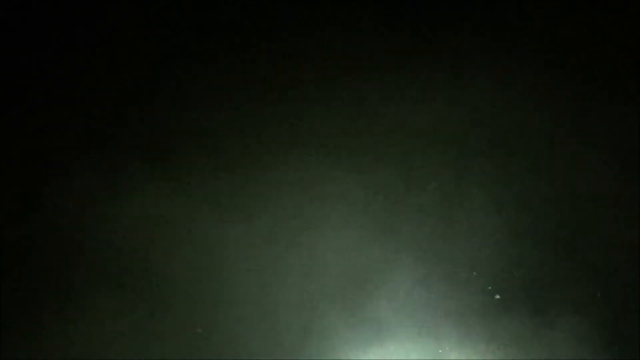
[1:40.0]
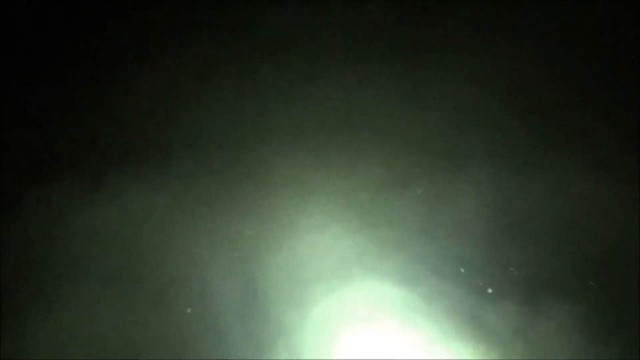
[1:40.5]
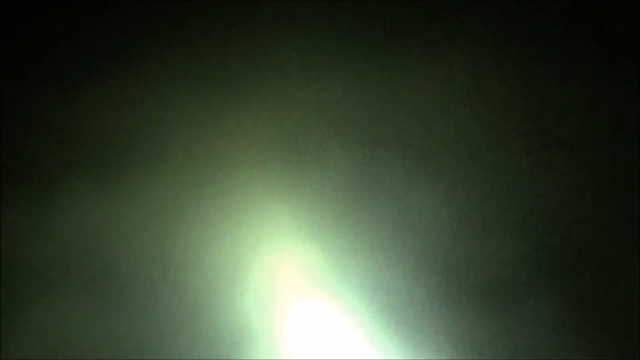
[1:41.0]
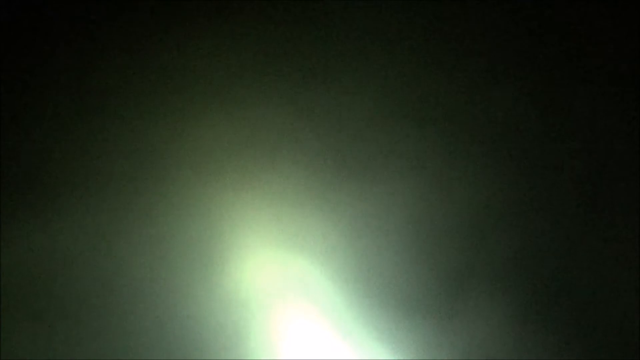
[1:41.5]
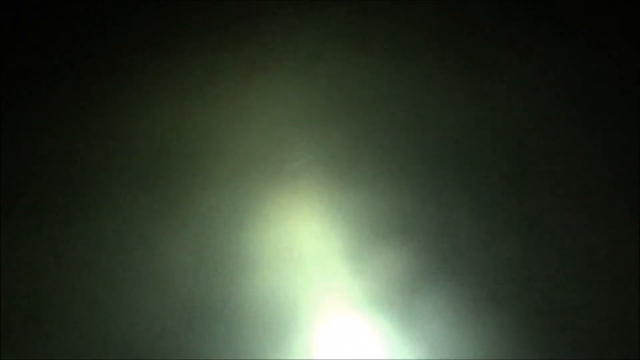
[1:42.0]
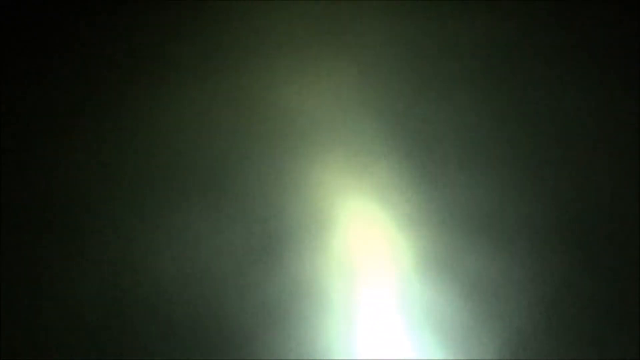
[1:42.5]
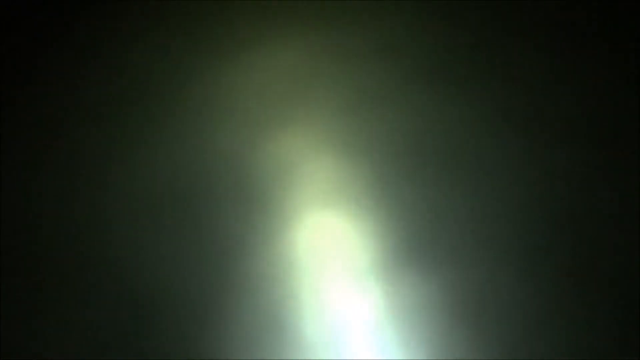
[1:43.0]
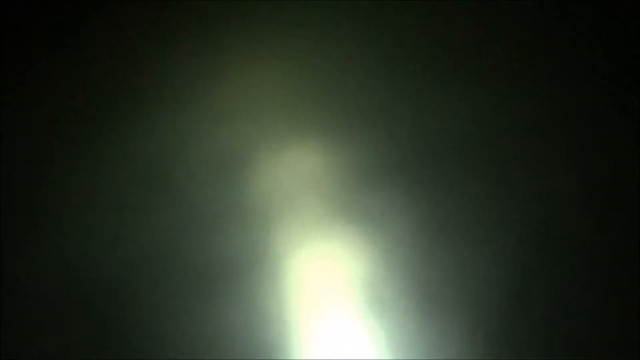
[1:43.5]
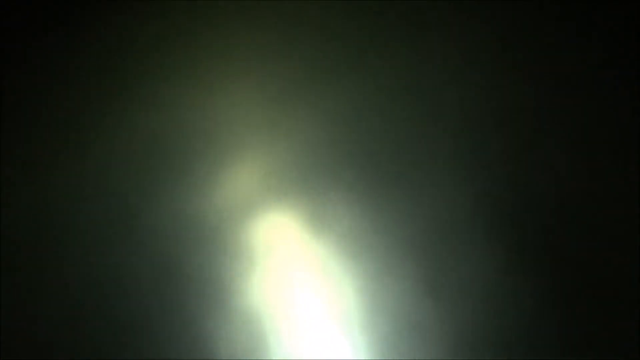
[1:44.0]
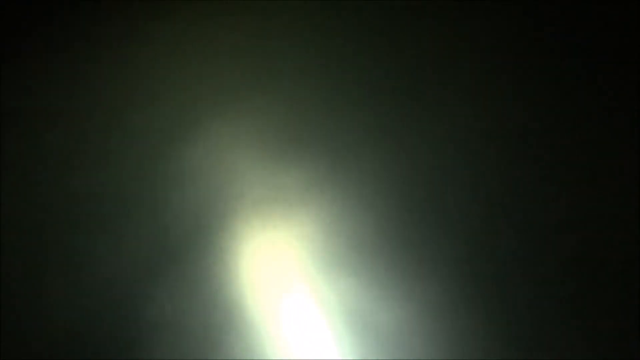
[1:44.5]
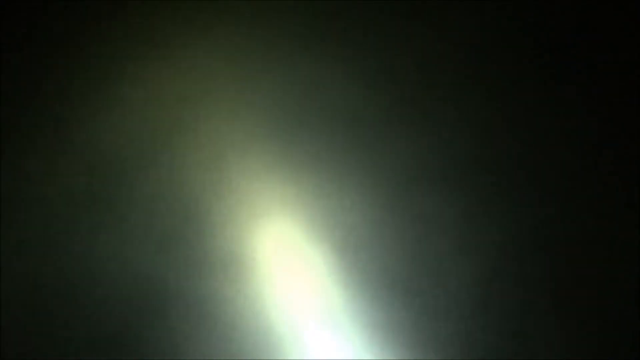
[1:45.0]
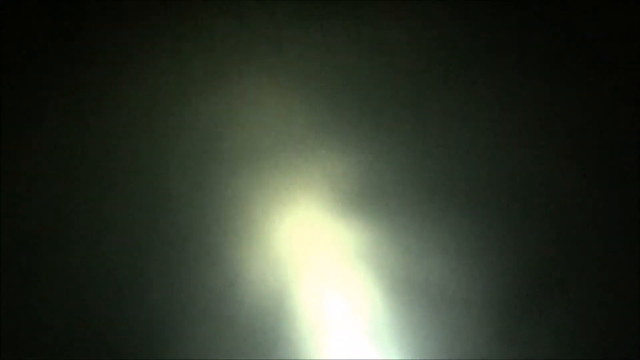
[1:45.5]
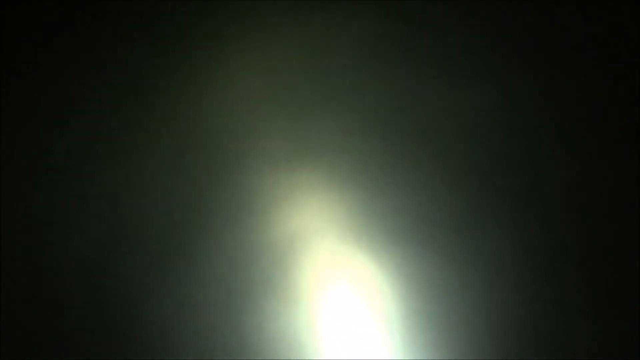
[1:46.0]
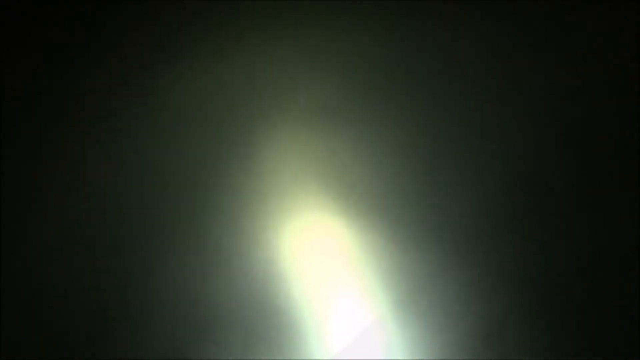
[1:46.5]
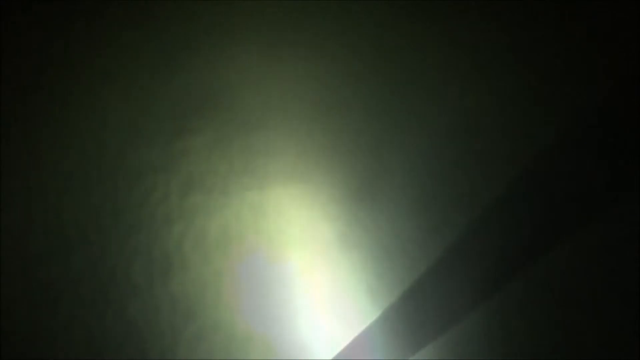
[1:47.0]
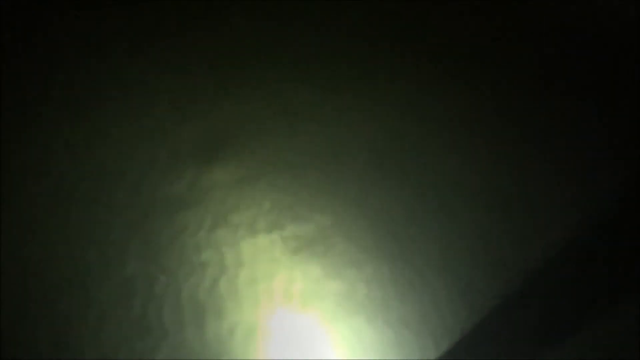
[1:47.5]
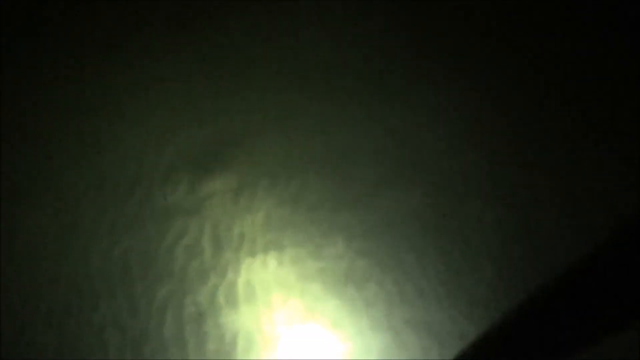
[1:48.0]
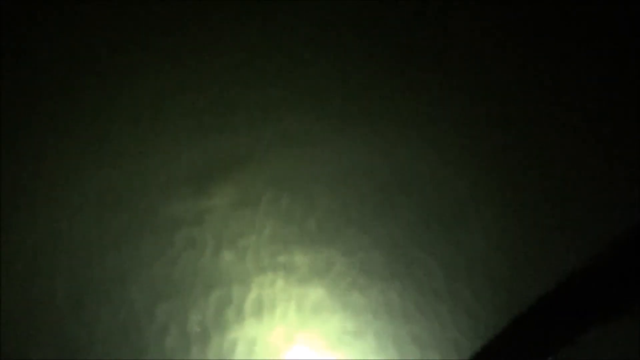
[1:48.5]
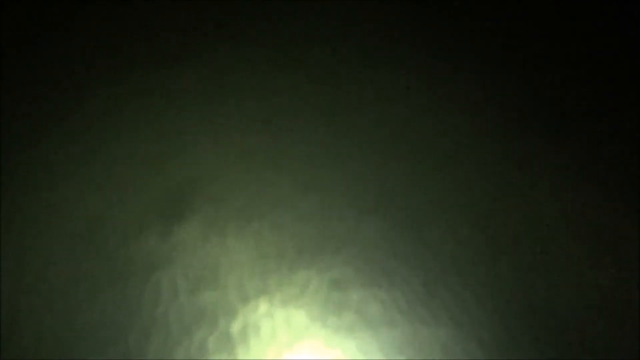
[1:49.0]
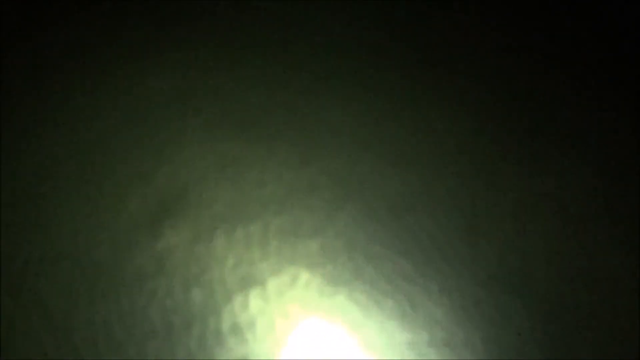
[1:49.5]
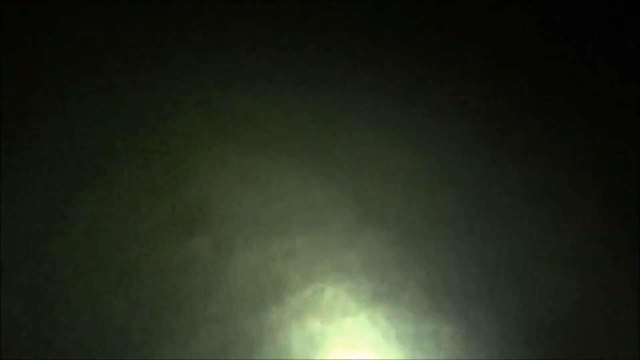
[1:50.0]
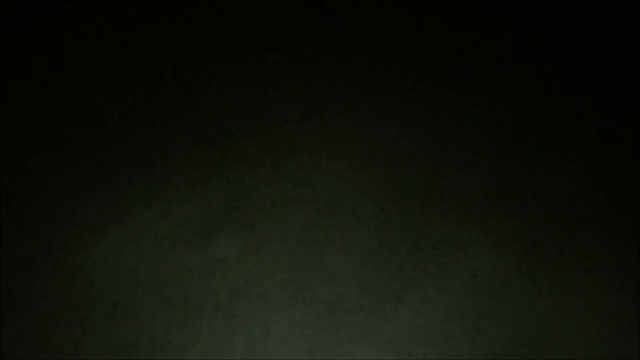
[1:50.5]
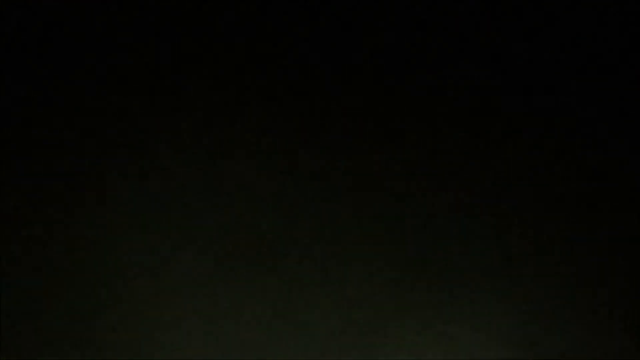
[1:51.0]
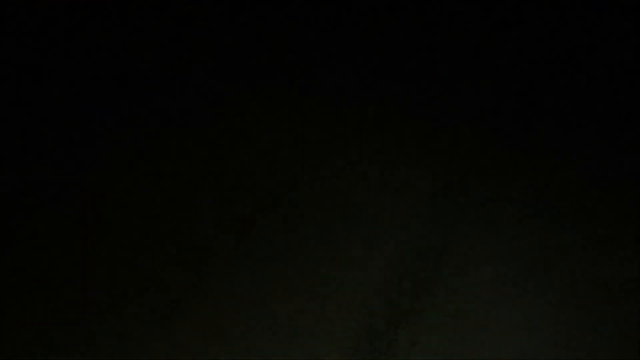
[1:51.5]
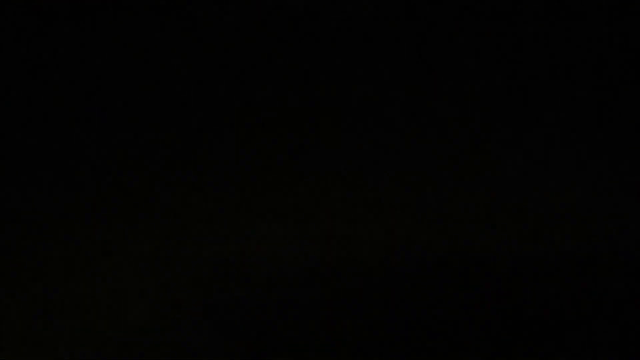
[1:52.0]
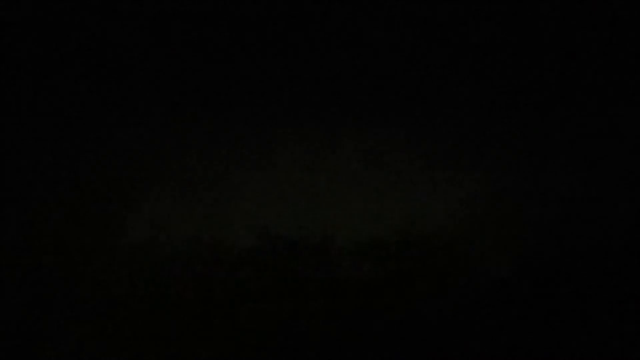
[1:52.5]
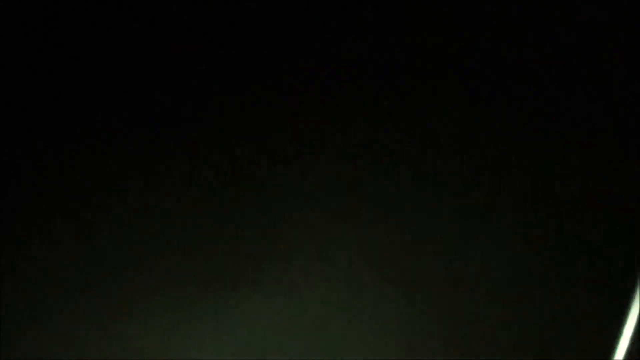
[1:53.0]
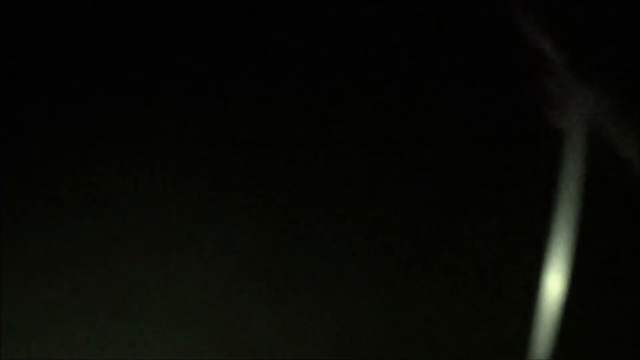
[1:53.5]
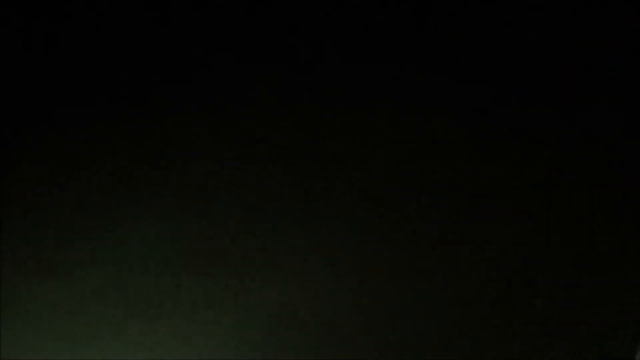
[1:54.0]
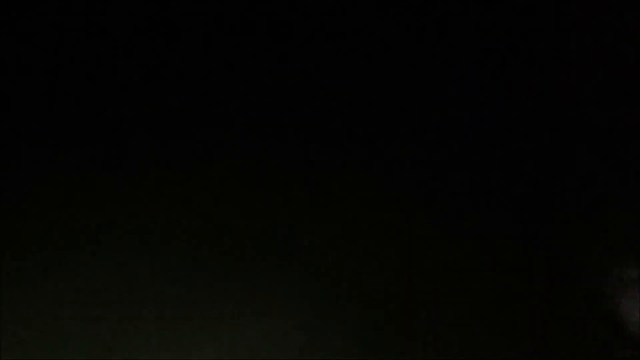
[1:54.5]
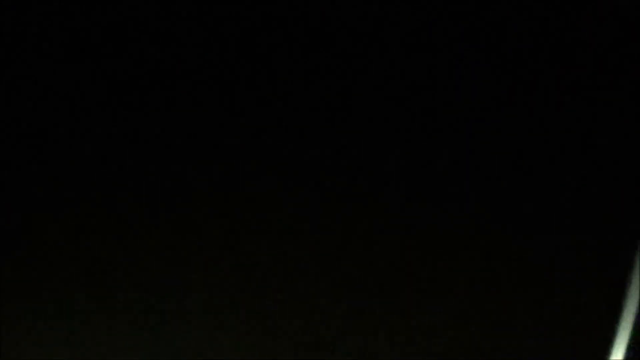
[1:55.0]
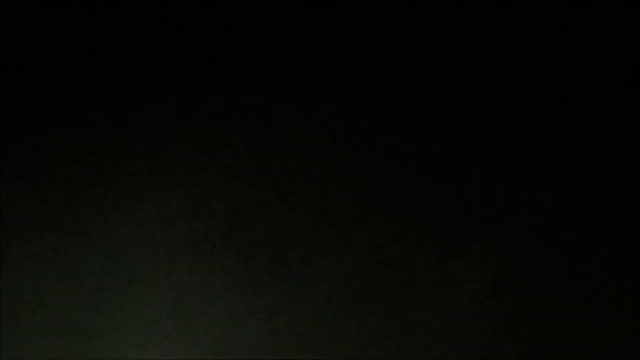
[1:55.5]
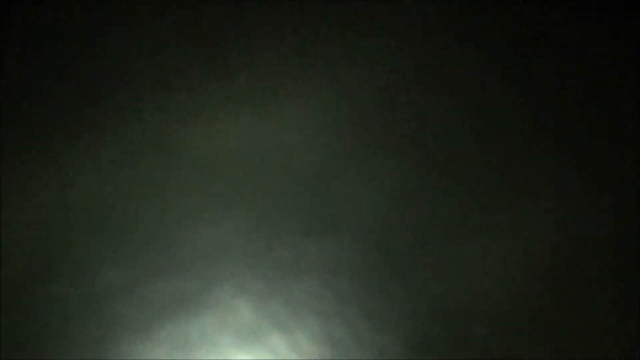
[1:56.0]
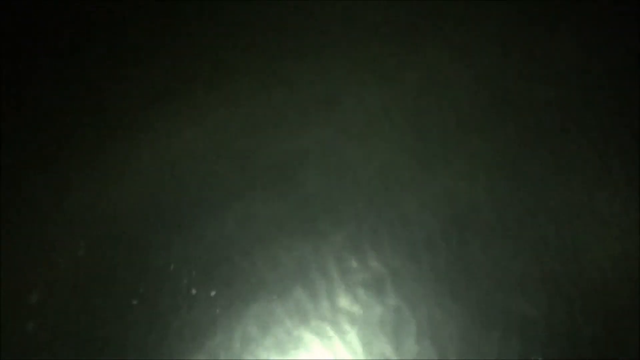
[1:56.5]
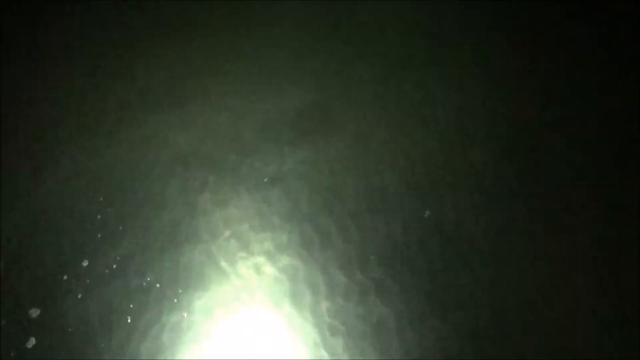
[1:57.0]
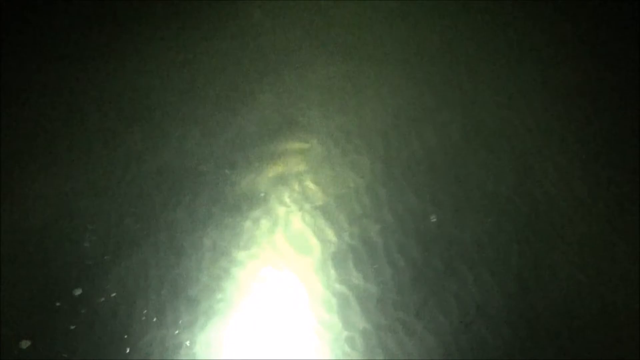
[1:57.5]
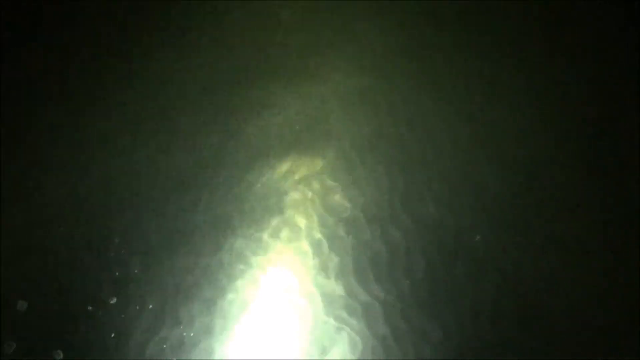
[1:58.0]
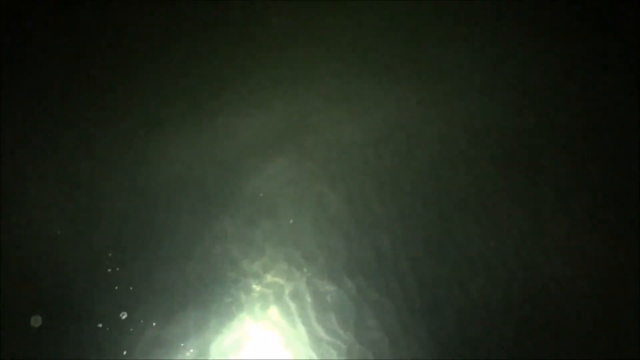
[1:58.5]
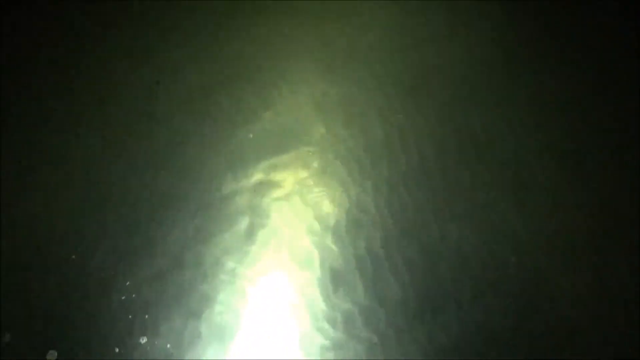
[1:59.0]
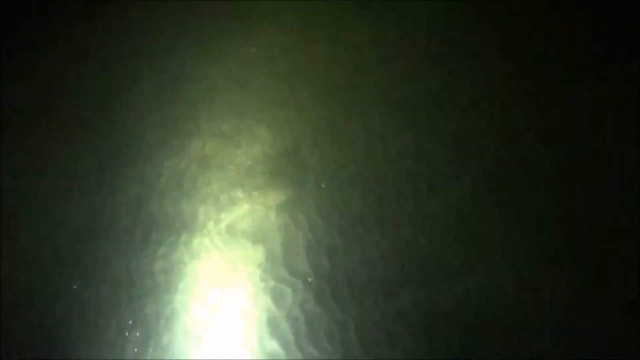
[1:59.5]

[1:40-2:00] The water is still recorded in the middle of the night, illuminated from below by the light. For a few seconds the camera rises and shows what appears to be a boat that the people are possibly inside. The camera then records the sky, which is completely dark, so the screen is entirely dark. Then, for a second, the metal stick holding the device is visible; the device, shaped like a black water float, illuminates the area below with a very bright, strong light.